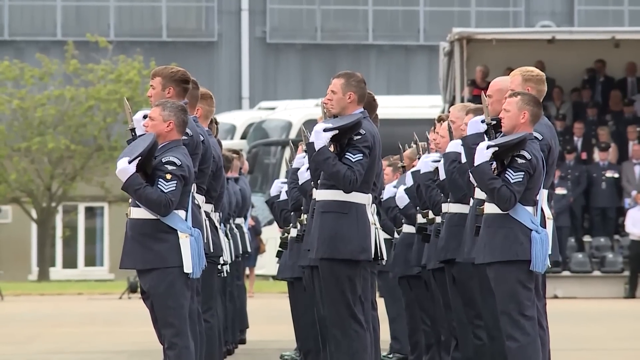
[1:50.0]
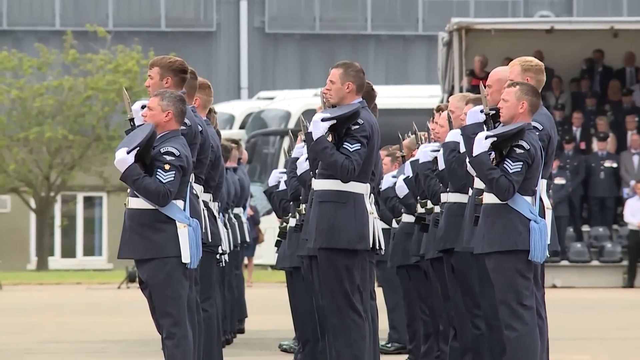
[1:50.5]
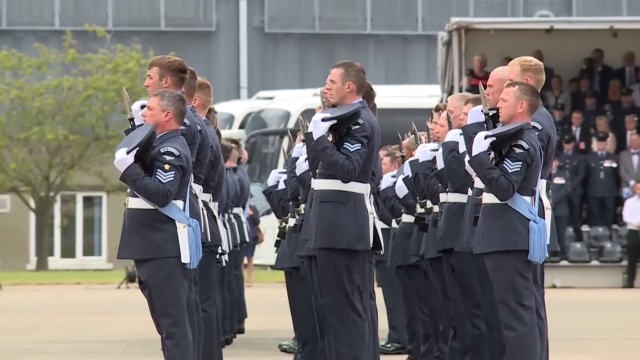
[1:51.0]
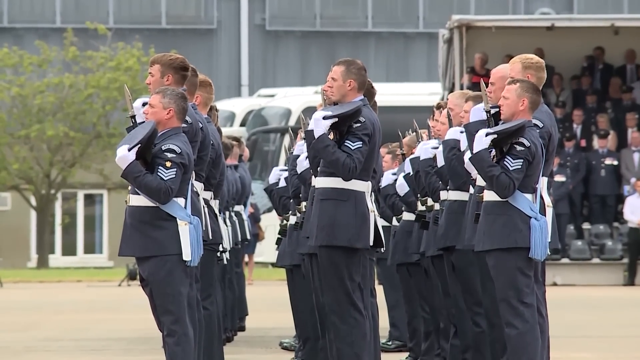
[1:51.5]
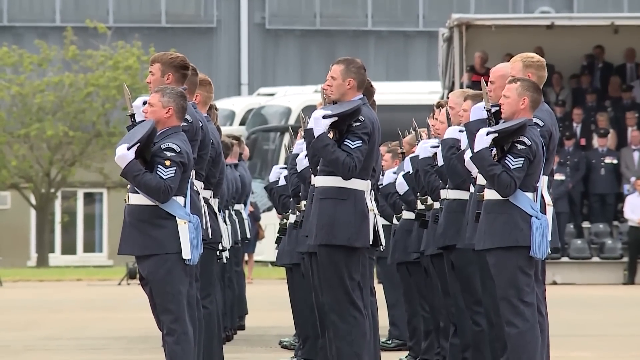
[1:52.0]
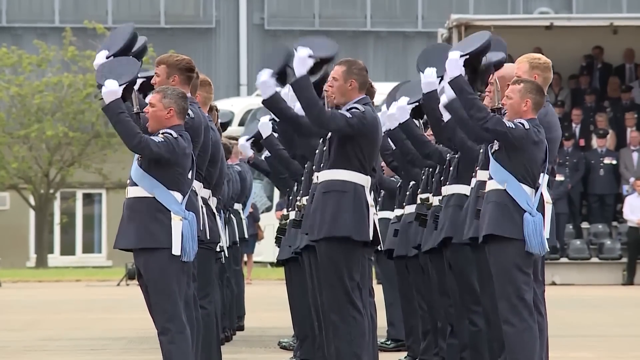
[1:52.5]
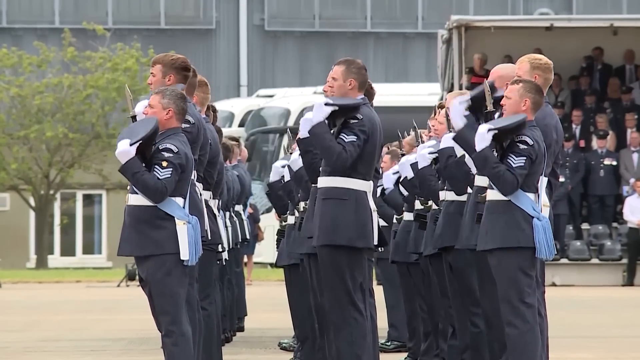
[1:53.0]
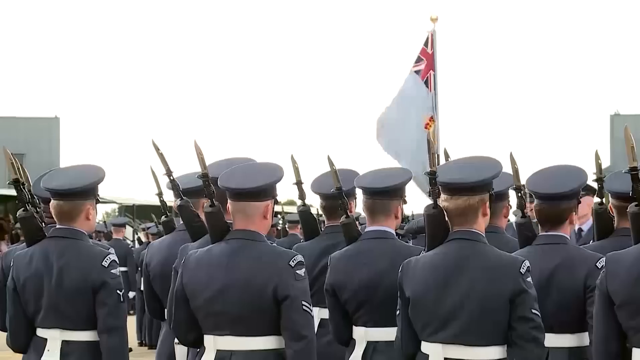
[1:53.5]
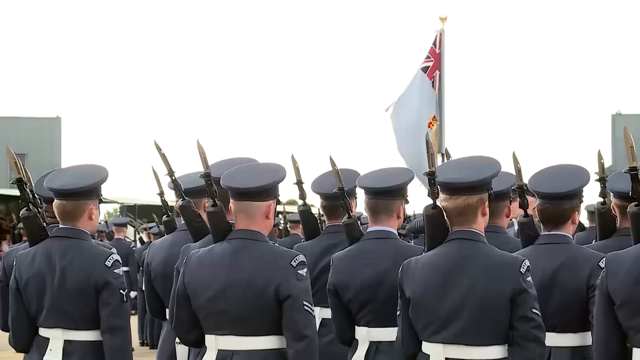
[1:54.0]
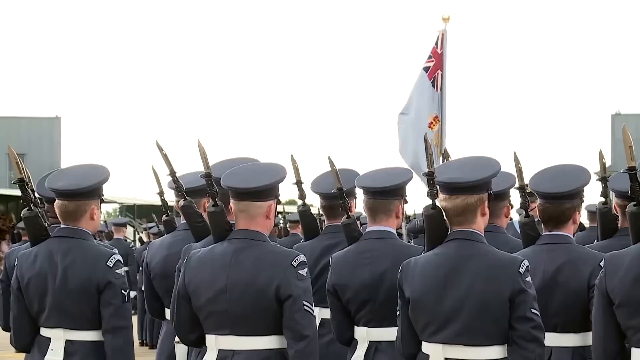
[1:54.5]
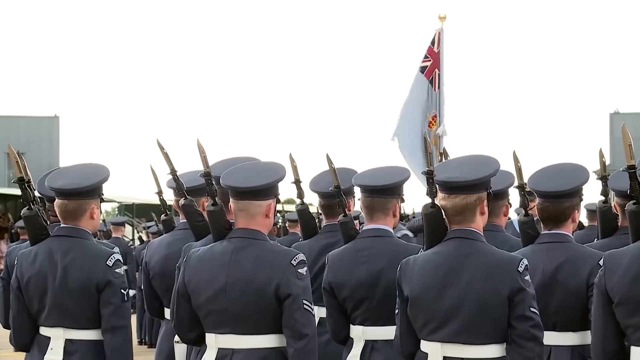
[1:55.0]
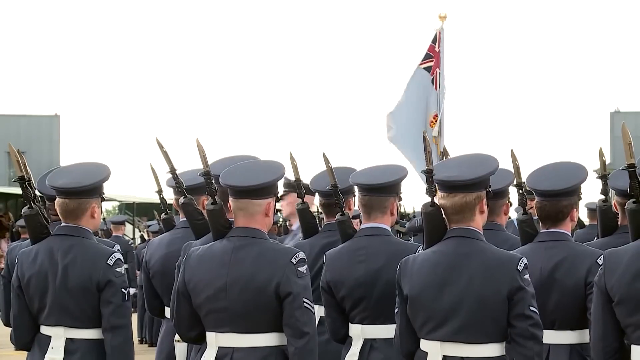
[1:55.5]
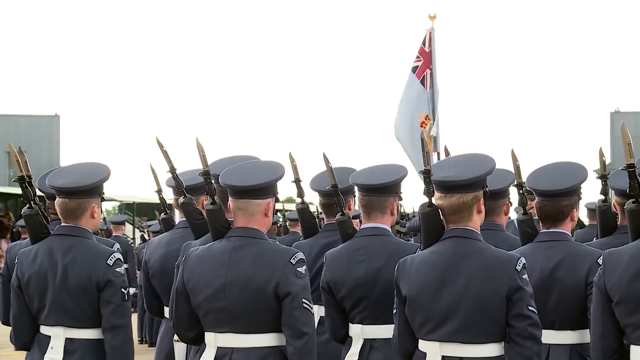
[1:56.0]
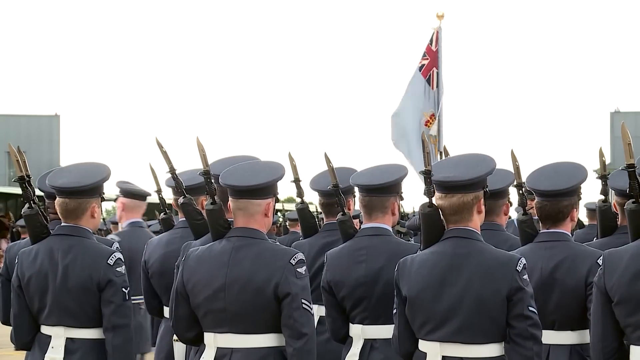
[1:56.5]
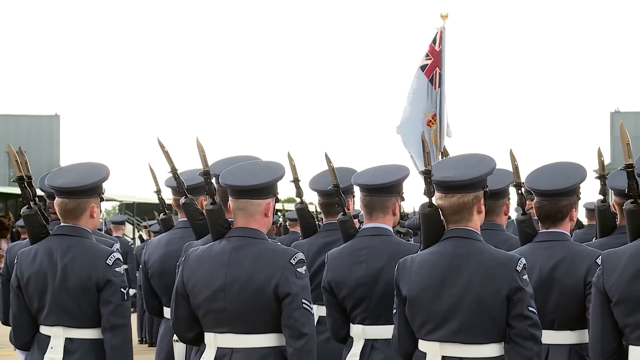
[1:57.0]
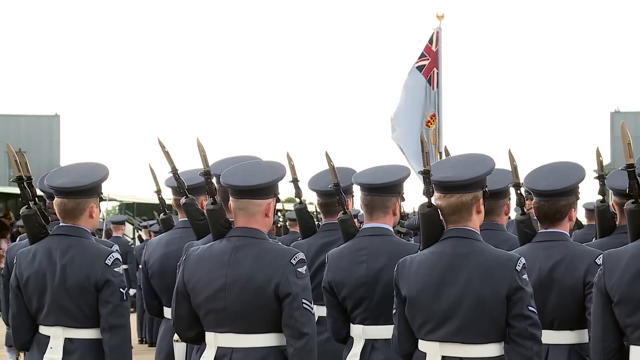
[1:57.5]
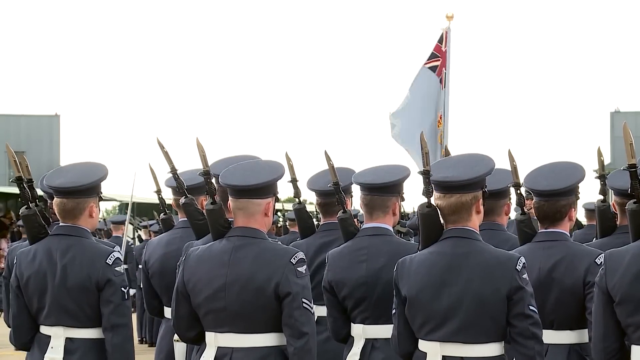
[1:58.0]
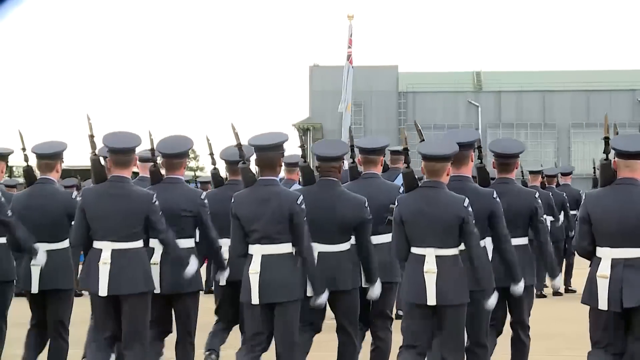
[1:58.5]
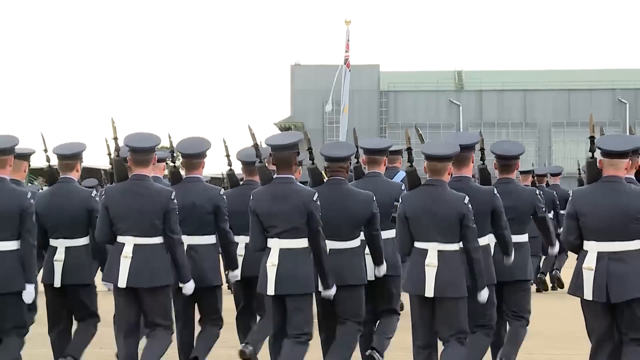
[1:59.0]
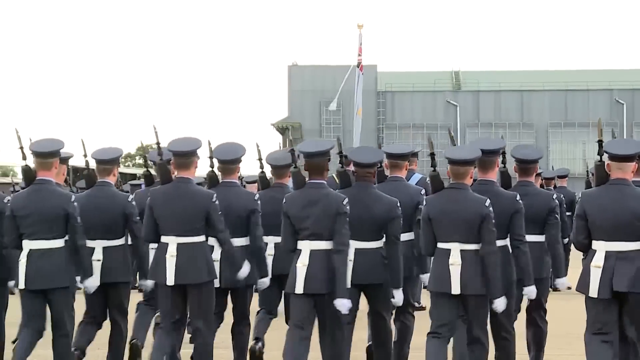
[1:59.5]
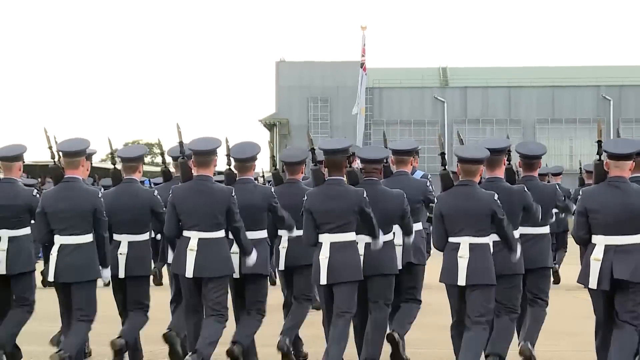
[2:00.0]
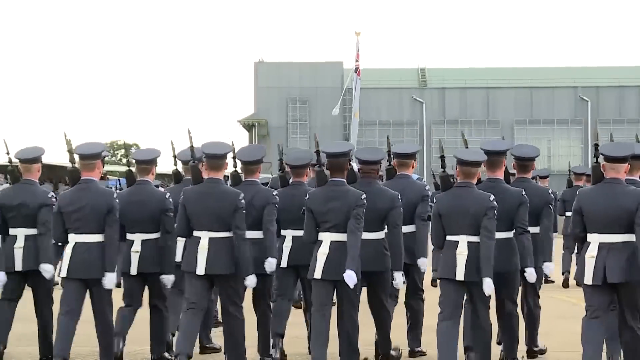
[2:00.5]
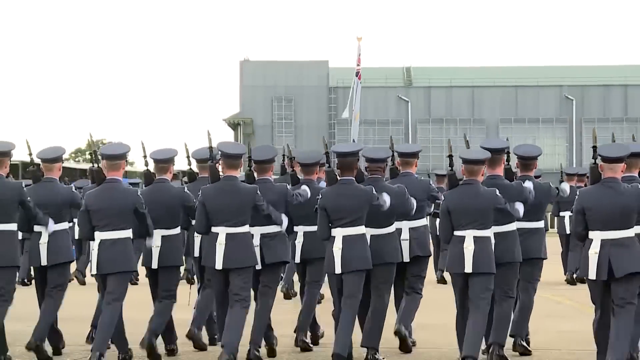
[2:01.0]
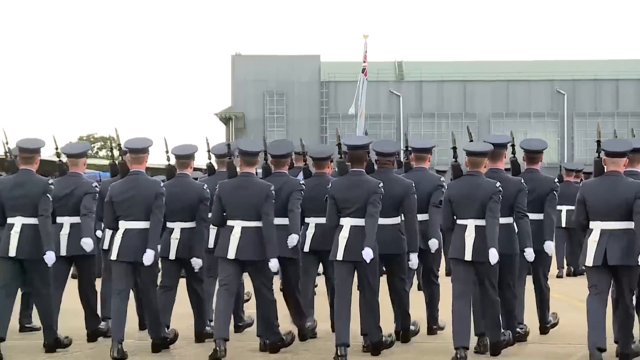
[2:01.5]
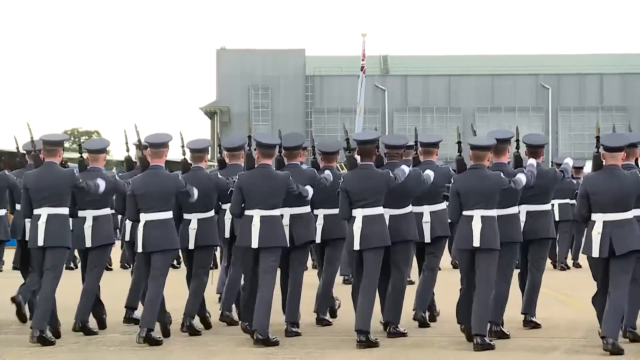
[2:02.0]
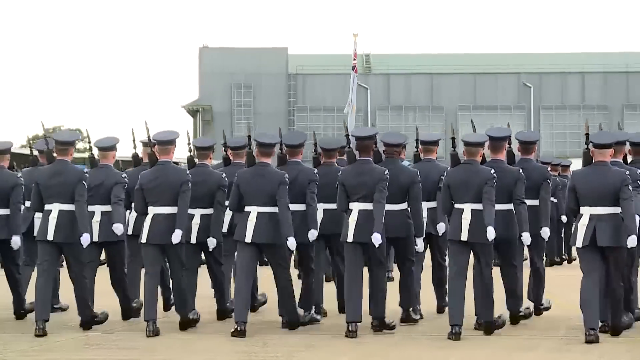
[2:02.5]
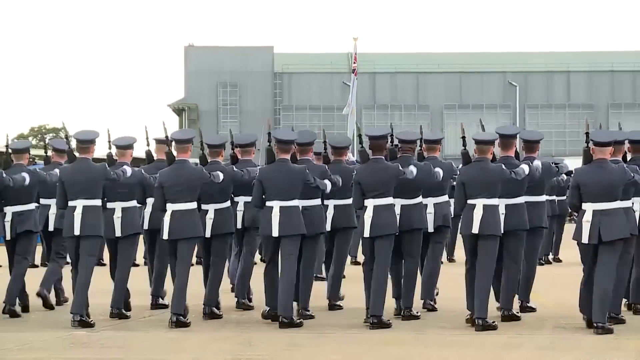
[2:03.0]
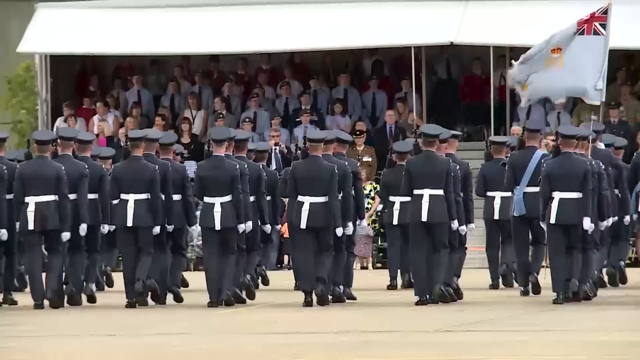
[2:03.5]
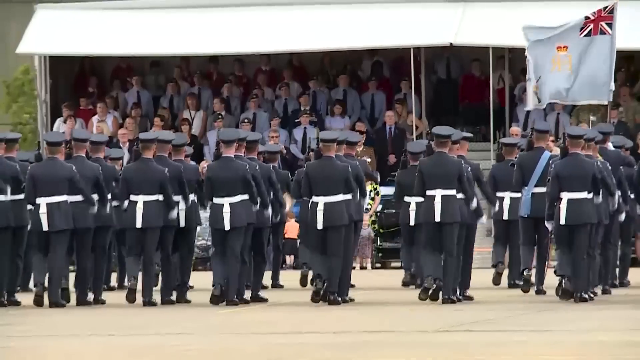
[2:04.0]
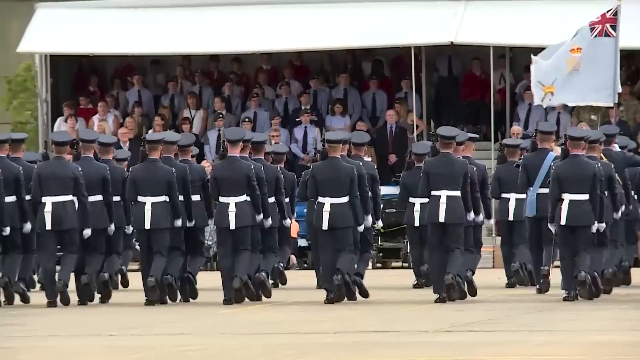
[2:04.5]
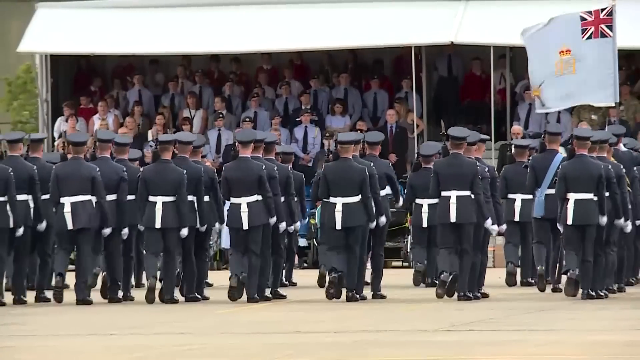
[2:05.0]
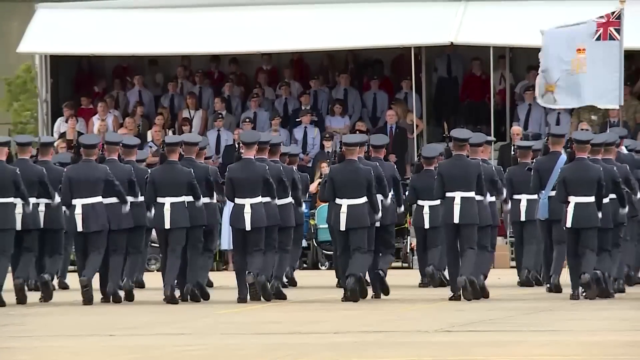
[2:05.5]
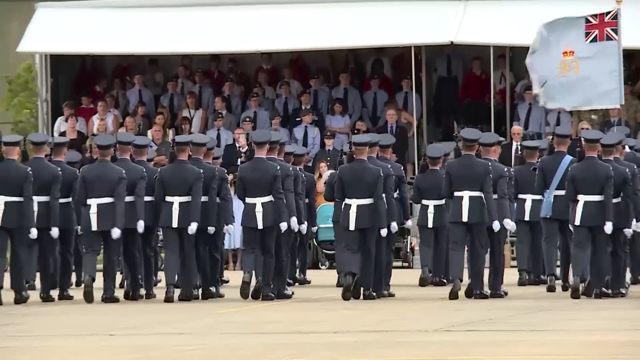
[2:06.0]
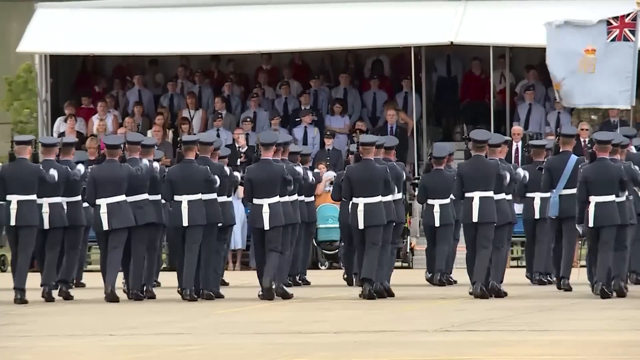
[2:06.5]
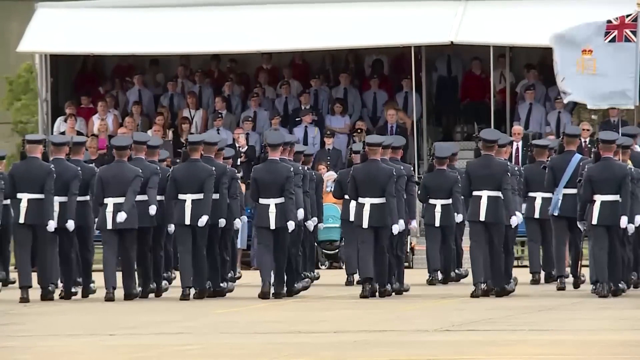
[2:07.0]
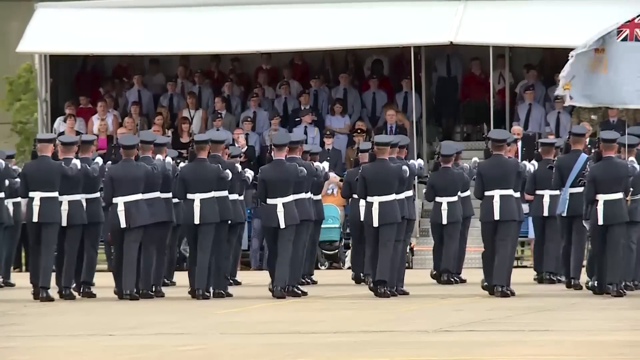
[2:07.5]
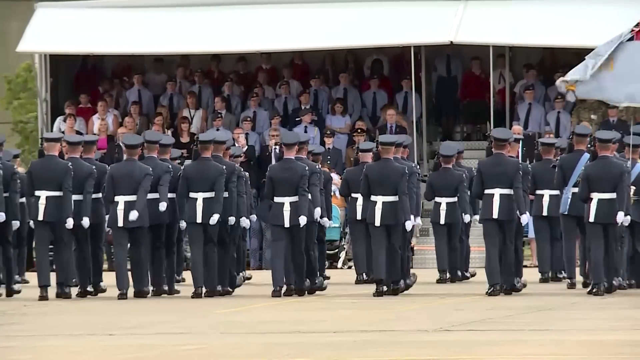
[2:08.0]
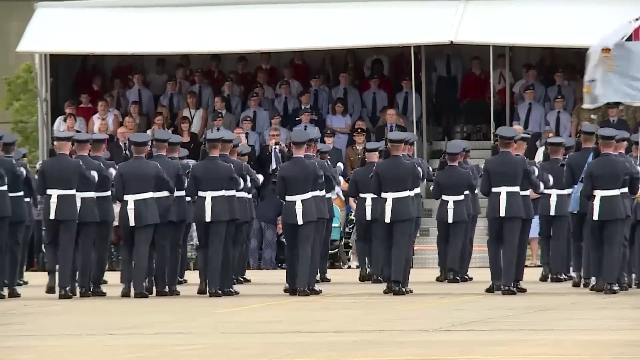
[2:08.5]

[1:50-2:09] Various shots show a military-style event attended by Prince Harry. Three rows of soldiers wear kind of black military suits with white sashes around their waists; the two men on the ends have blue sashes over their shoulders. They all carry bayonets and have just removed their hats, holding them on their left shoulders. In the background there is a building with a green tree, two white coaches, and a small covered seating structure with maybe four or five rows of tiered seating, where everyone is stood up watching the military procession. The scene is then seen from behind the soldiers, who have their hats on, with people walking in front of them. Then all of the soldiers march, seen from behind, walking towards the building in complete synchronisation and marching towards the audience in the tiered seating areas.